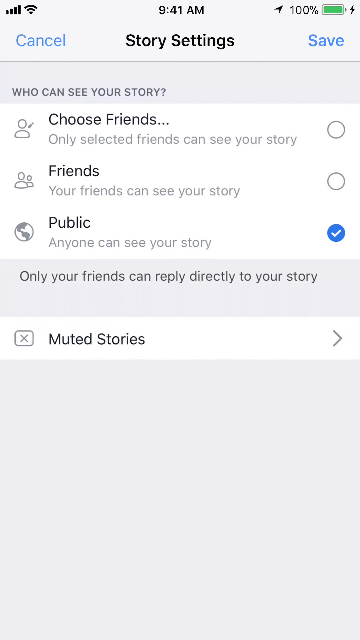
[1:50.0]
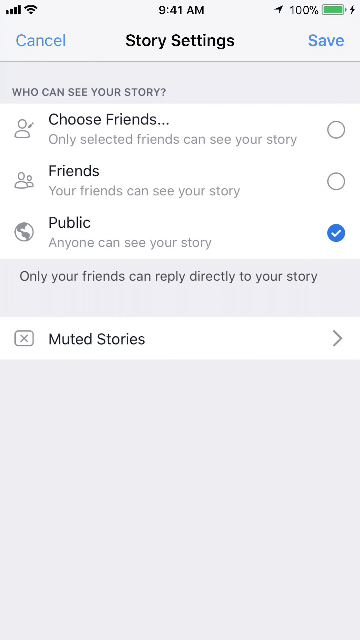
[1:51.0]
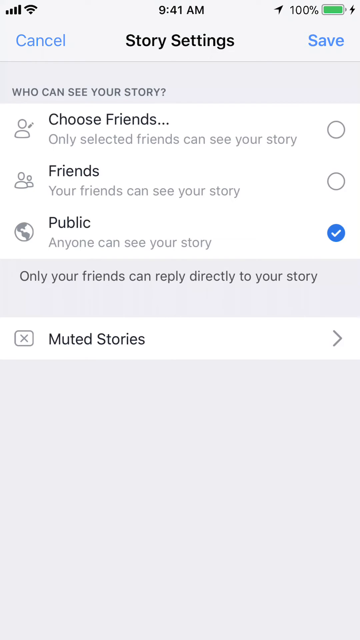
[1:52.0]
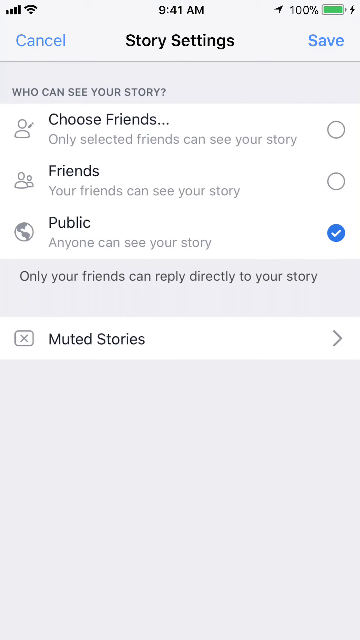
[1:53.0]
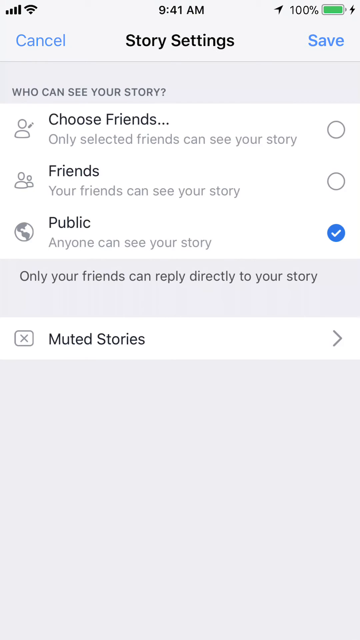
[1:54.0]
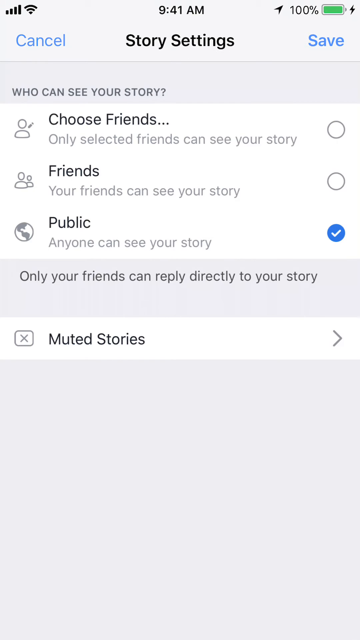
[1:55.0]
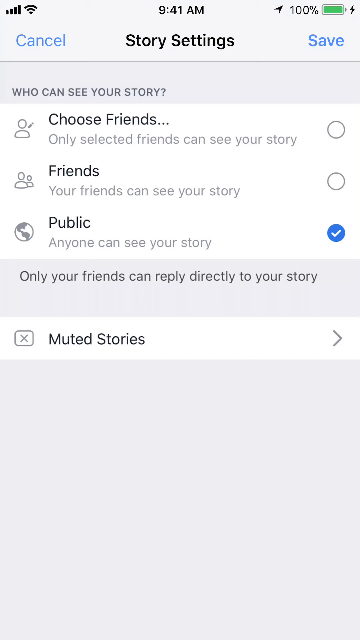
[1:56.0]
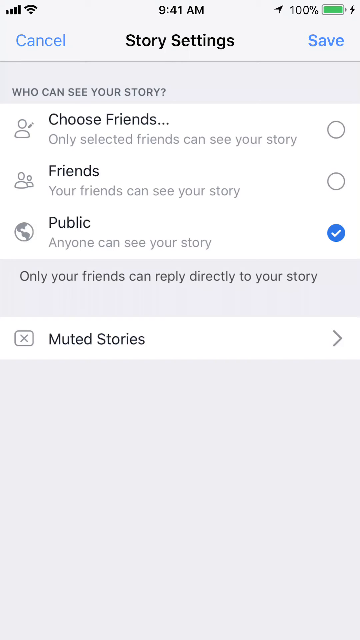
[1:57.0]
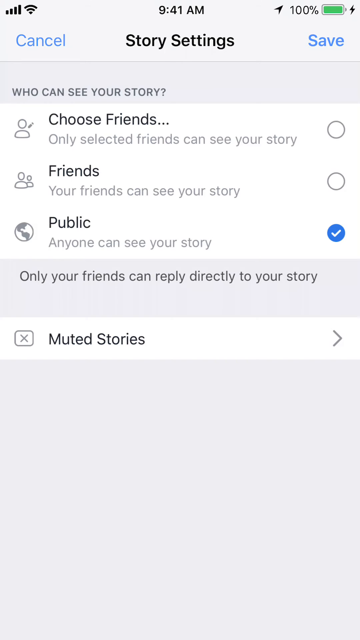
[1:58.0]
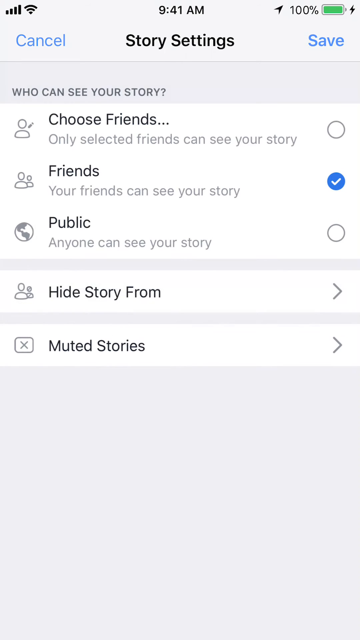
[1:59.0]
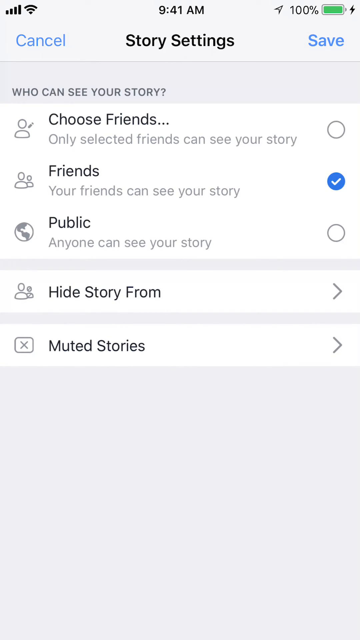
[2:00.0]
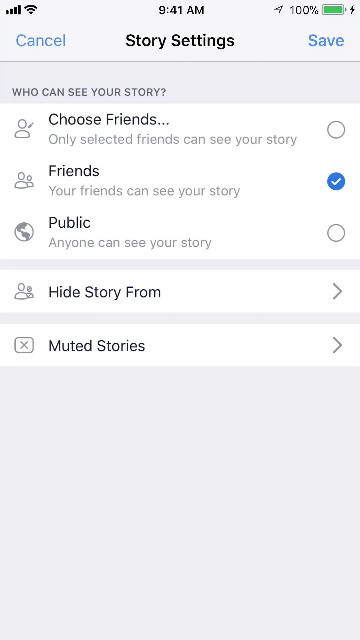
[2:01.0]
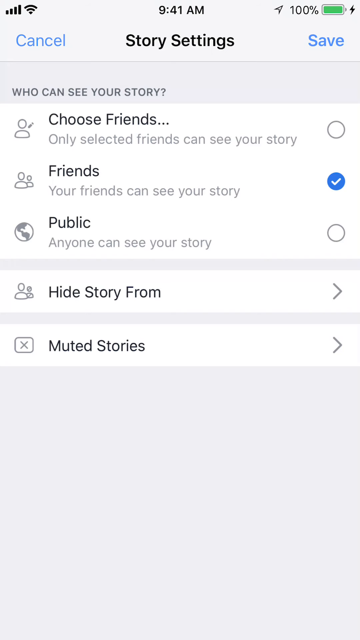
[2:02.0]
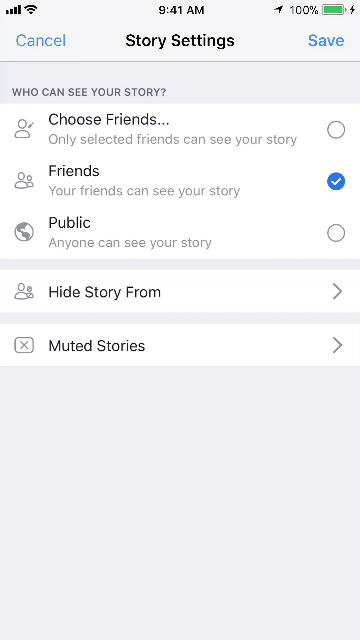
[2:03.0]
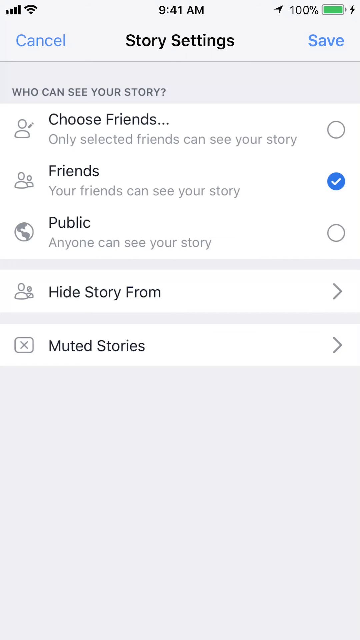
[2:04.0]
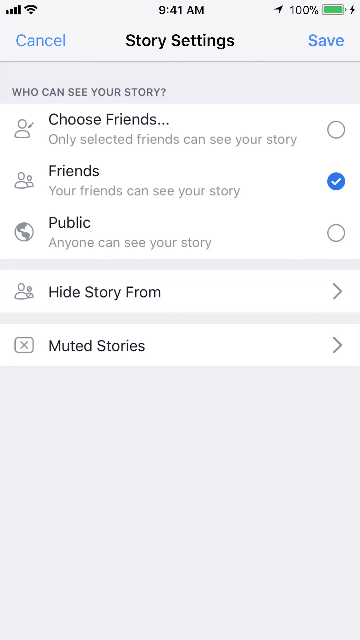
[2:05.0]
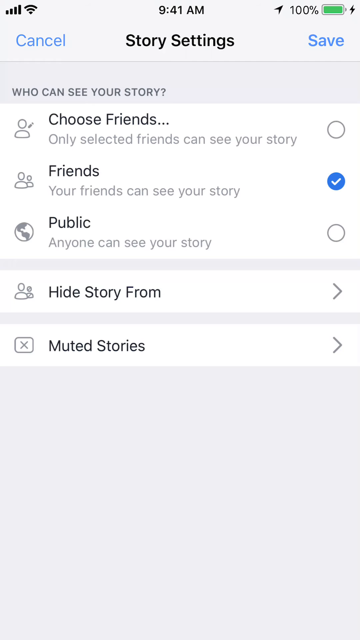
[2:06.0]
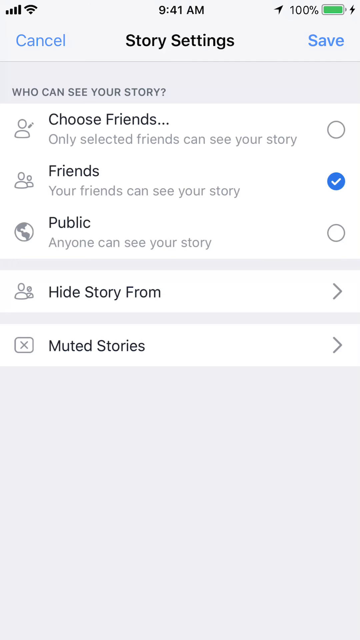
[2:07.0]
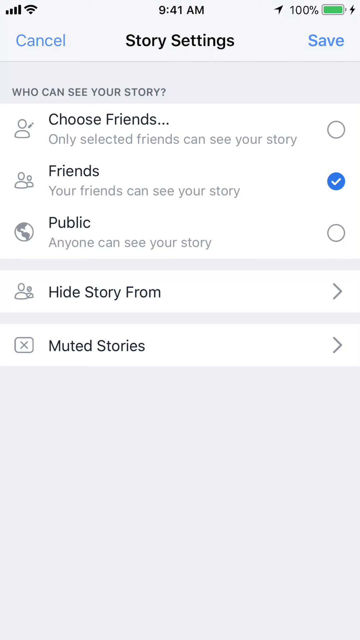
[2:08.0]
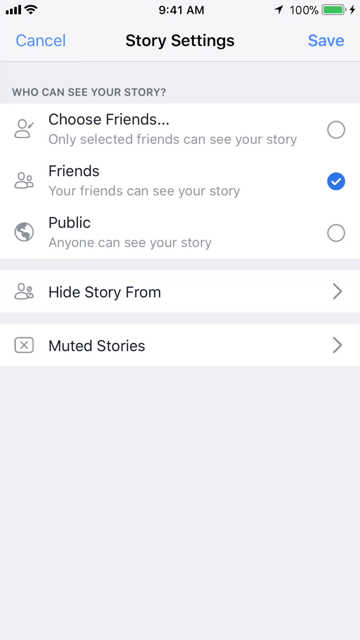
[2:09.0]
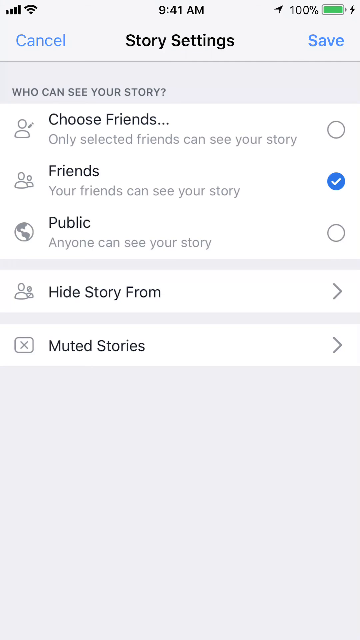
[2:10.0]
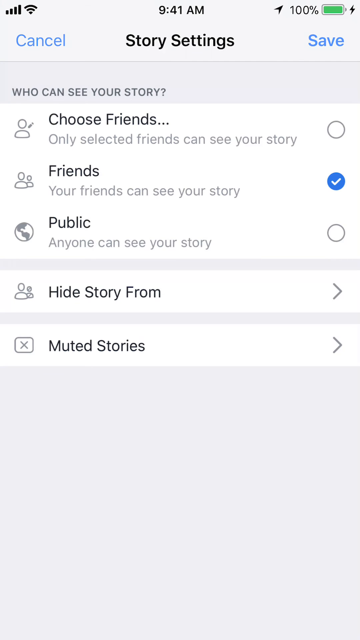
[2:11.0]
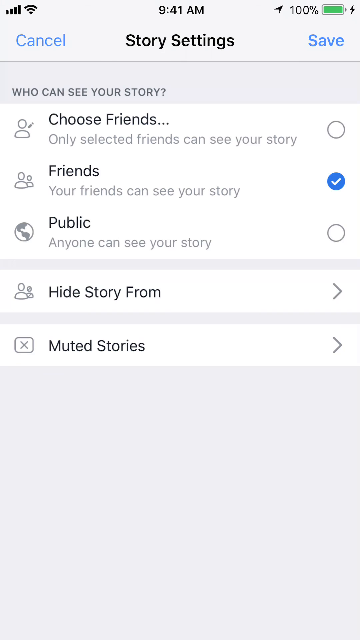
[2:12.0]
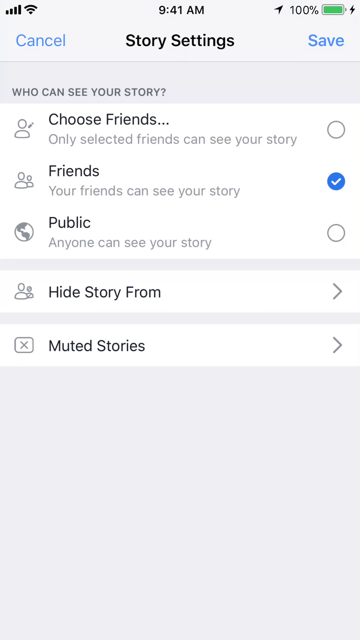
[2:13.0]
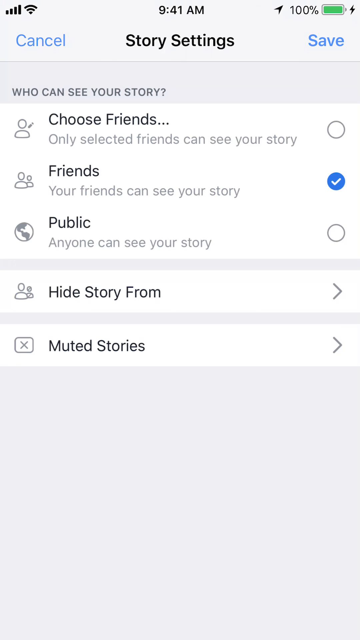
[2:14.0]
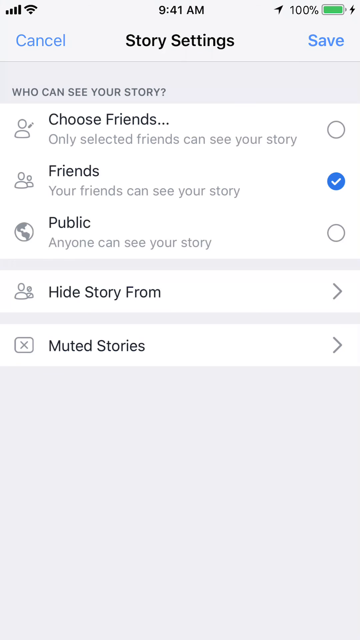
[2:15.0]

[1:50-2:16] The signal strength bars and Wi-Fi icon are in the upper left corner, the time at the top middle is 9:41 AM, and the green, filled battery icon in the upper right corner shows 100%. Below are three headings: "cancel", "story settings" and "save". Underneath is the subheading "who can see your story", followed by the options "choose friends" ("only selected friends can see your story"), "friends" ("your friends can see your story"), "public" ("anyone can see your story"), "hide story from" with a drop-down, and "muted stories" with an arrow and a drop-down.